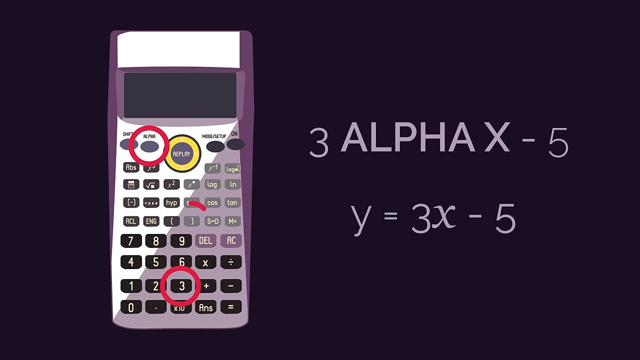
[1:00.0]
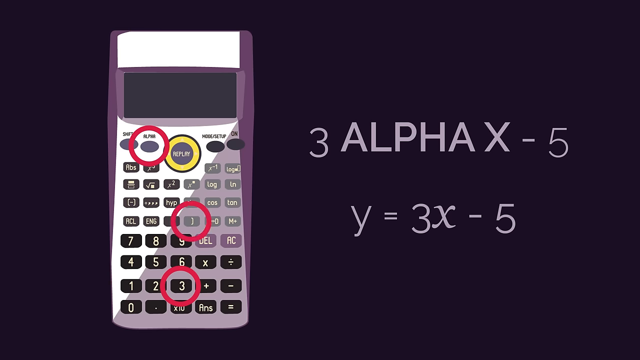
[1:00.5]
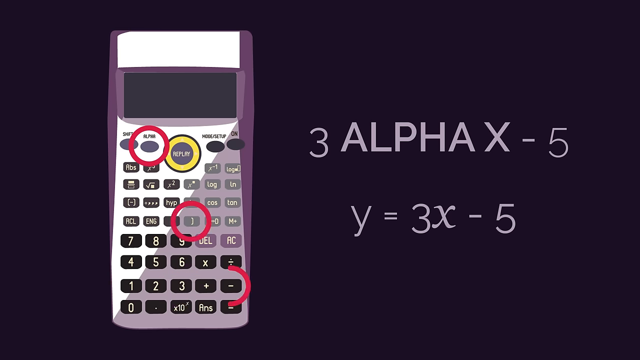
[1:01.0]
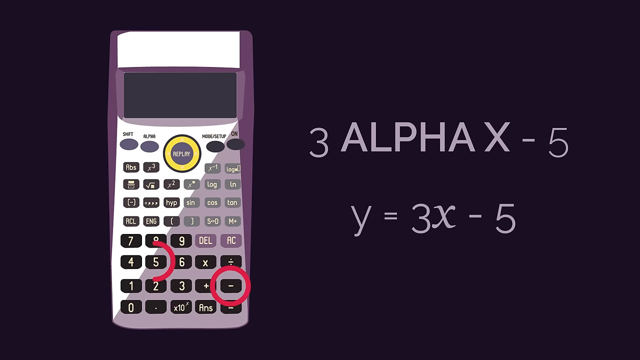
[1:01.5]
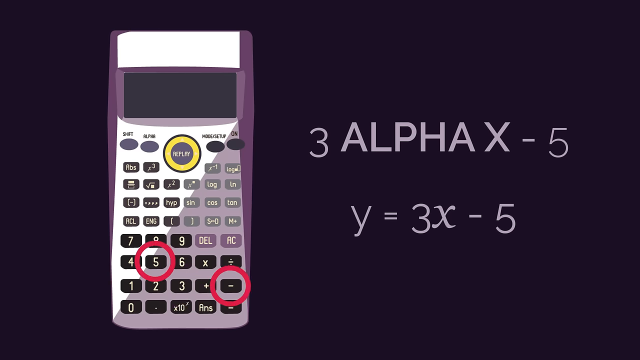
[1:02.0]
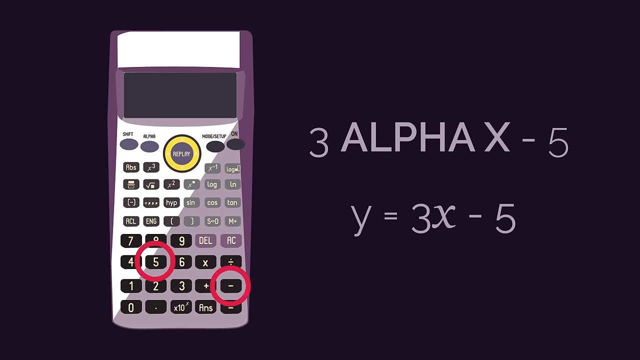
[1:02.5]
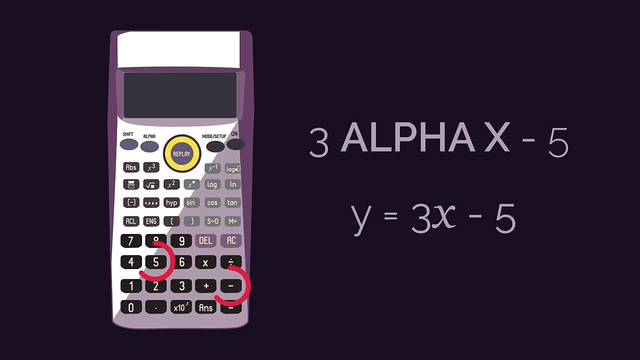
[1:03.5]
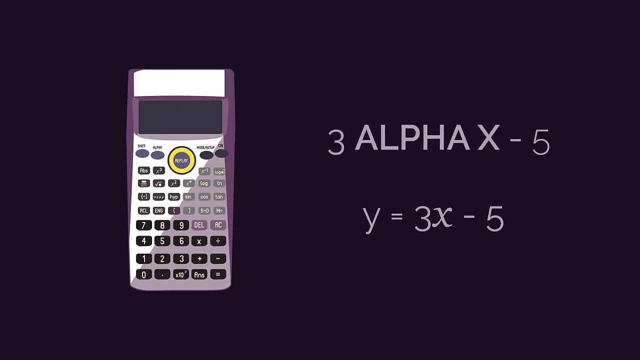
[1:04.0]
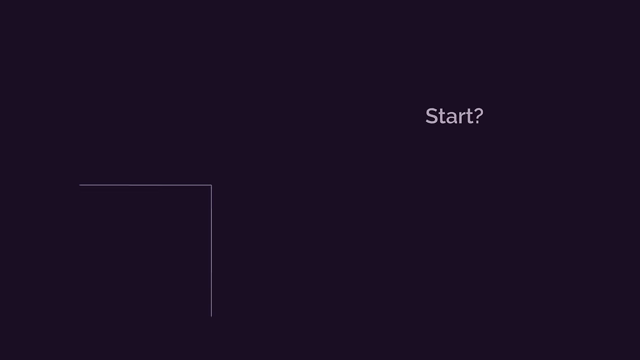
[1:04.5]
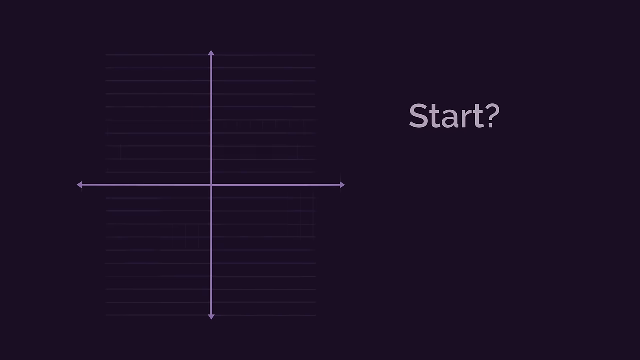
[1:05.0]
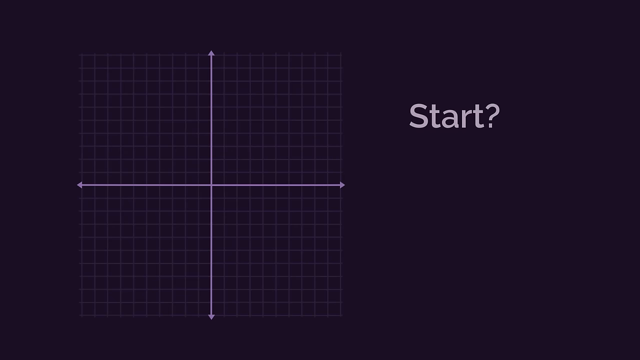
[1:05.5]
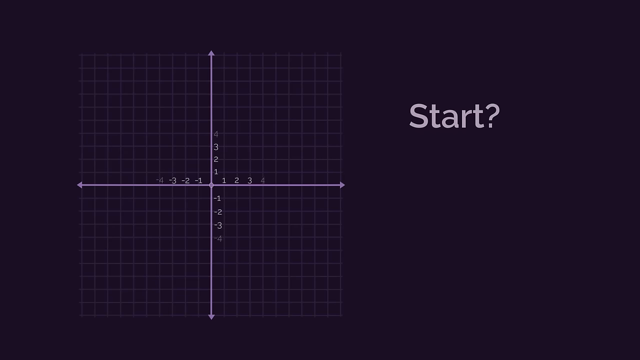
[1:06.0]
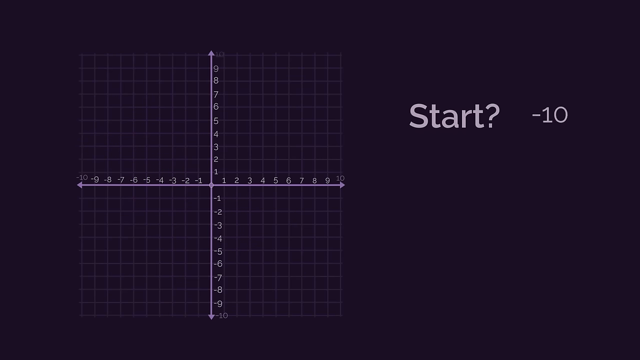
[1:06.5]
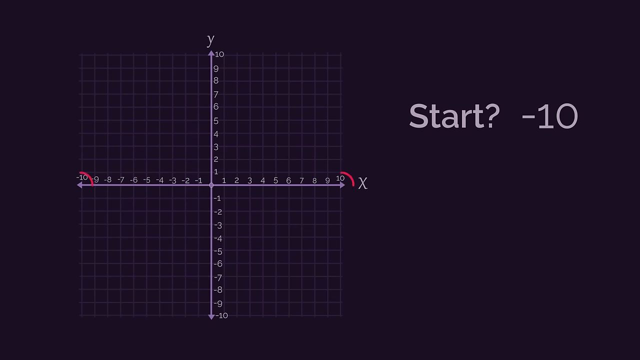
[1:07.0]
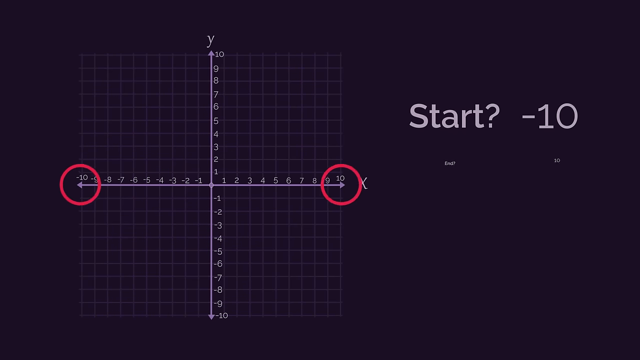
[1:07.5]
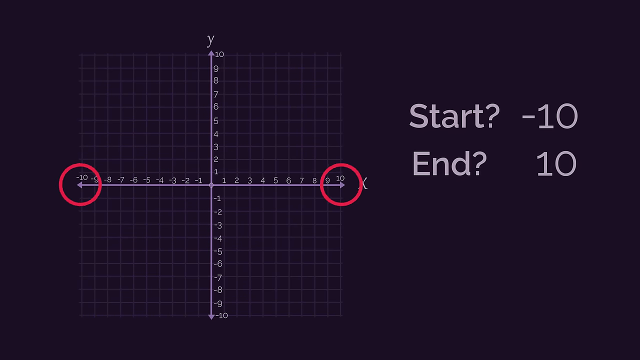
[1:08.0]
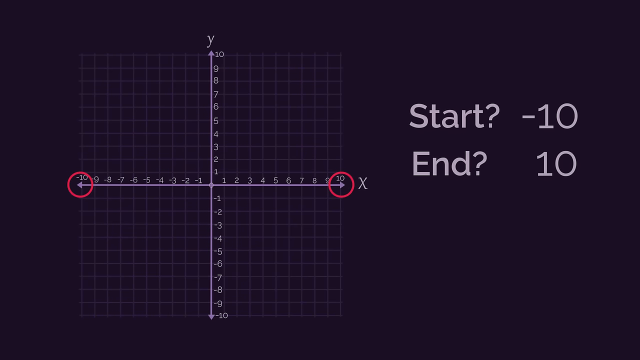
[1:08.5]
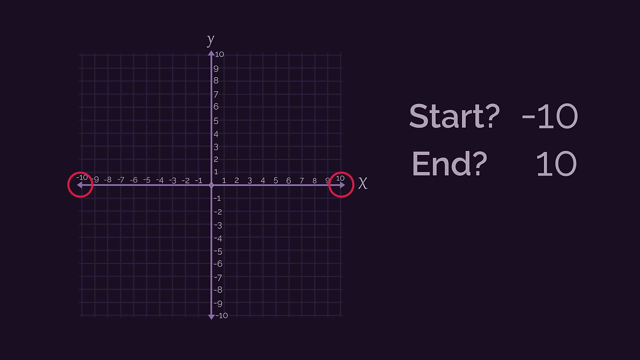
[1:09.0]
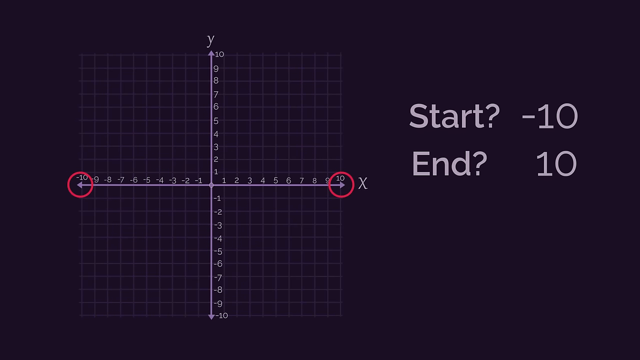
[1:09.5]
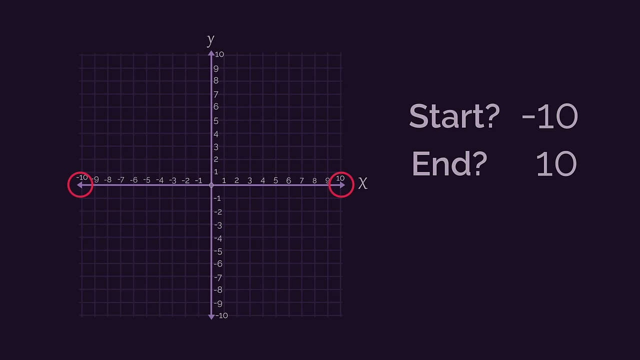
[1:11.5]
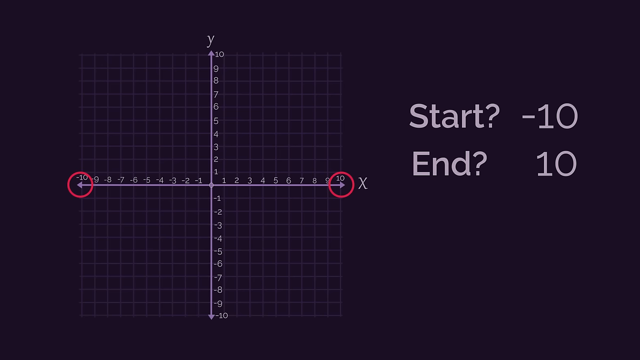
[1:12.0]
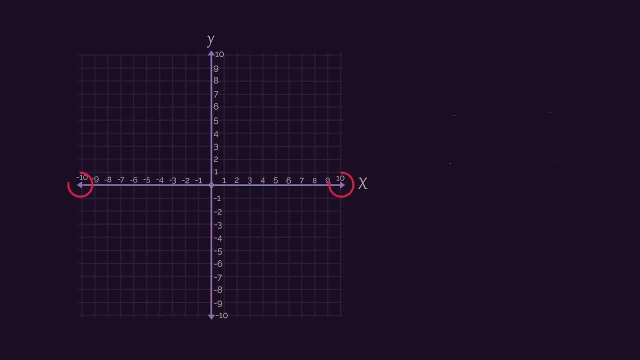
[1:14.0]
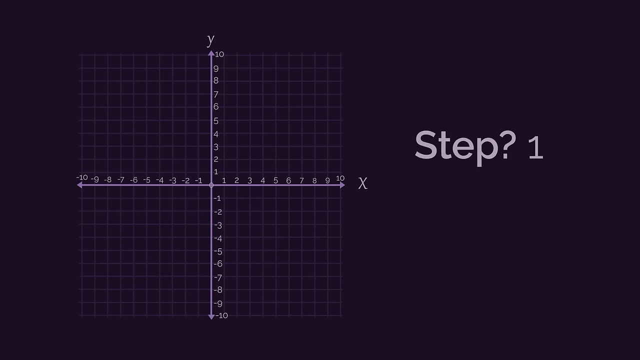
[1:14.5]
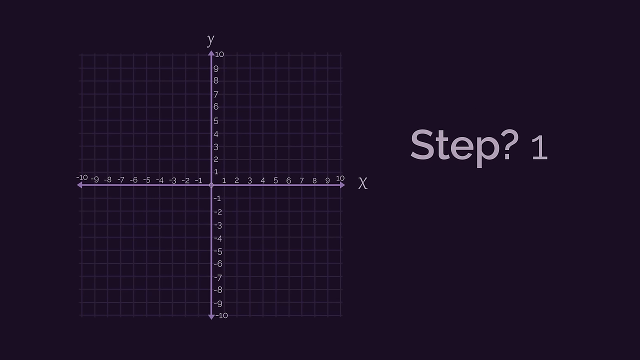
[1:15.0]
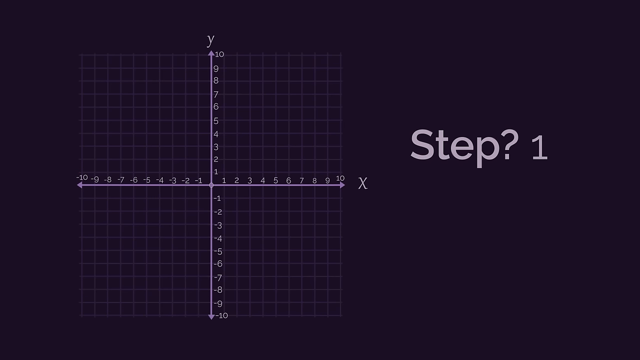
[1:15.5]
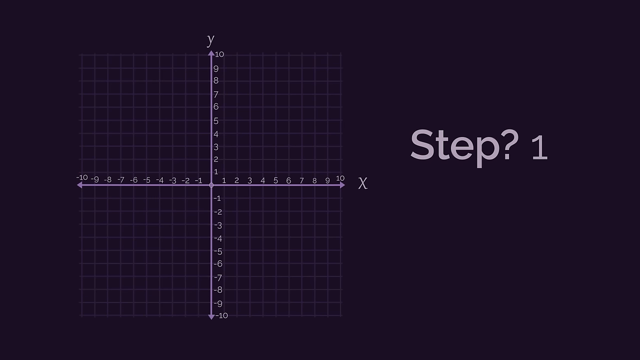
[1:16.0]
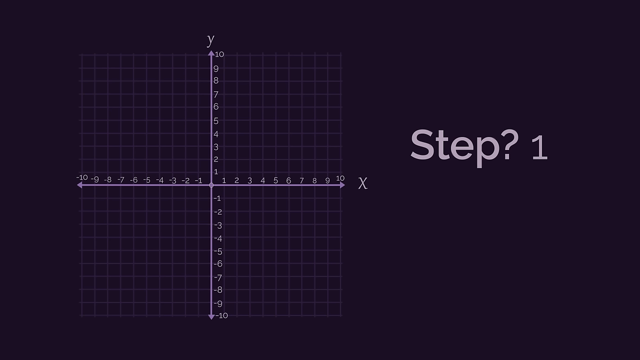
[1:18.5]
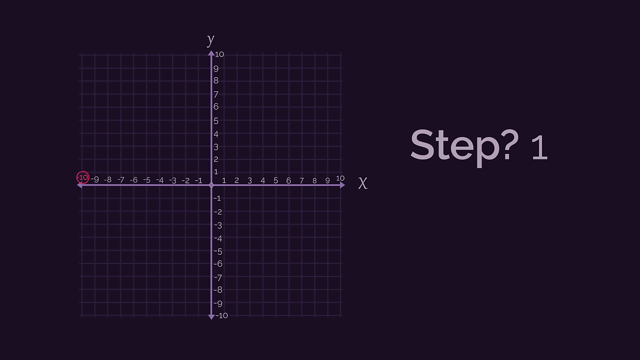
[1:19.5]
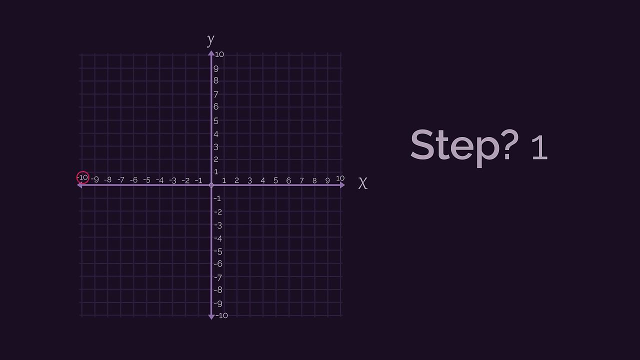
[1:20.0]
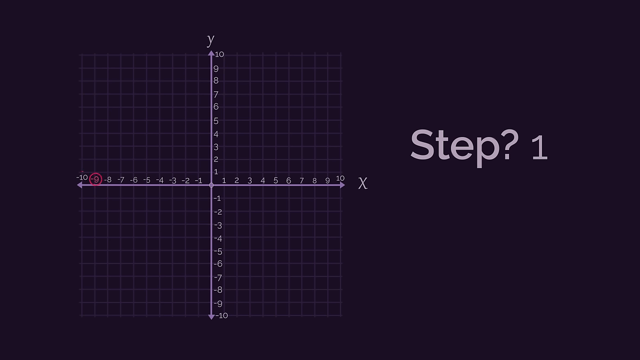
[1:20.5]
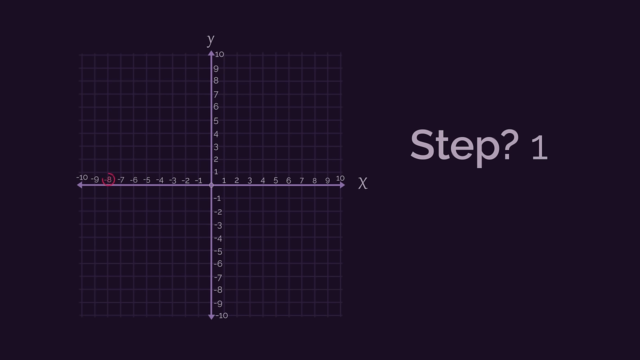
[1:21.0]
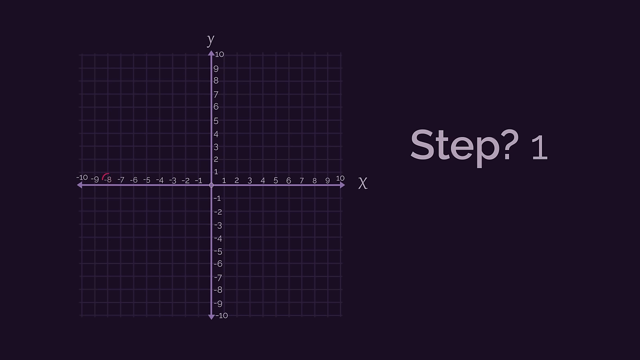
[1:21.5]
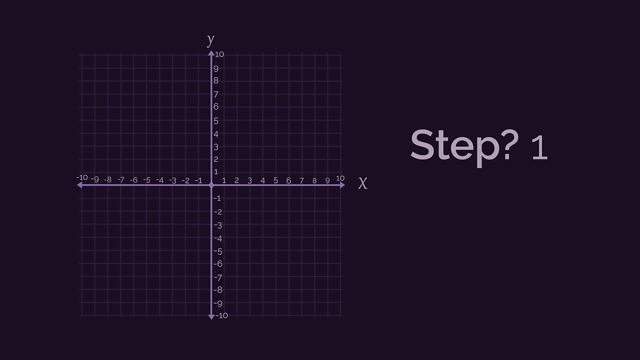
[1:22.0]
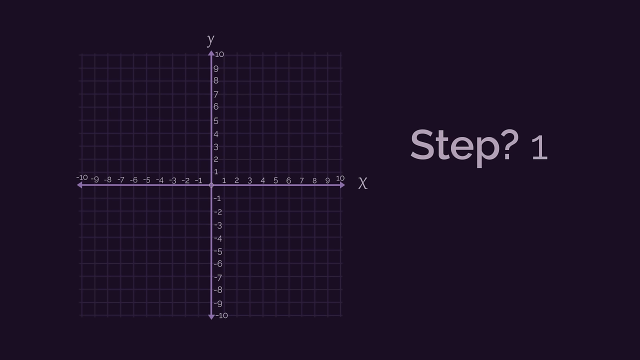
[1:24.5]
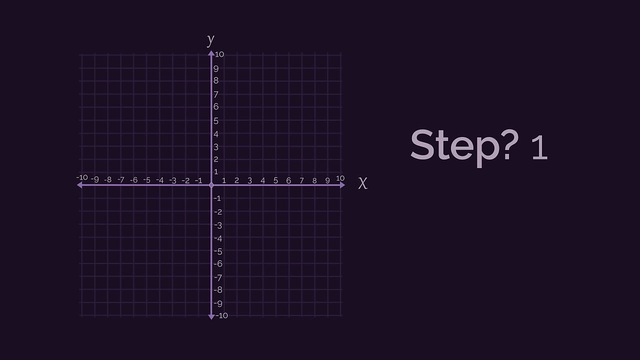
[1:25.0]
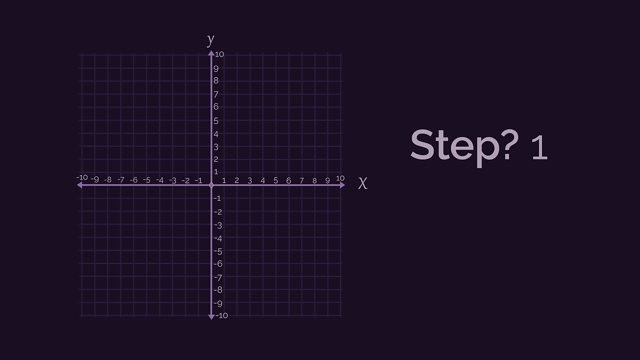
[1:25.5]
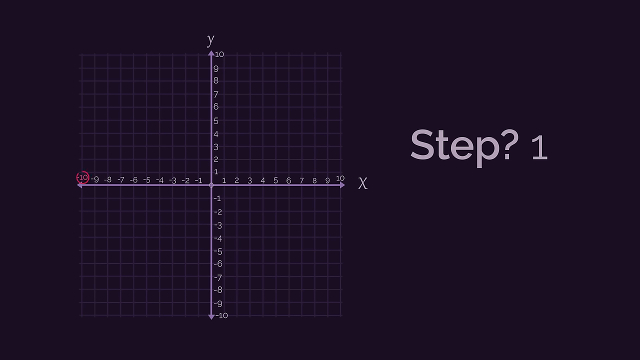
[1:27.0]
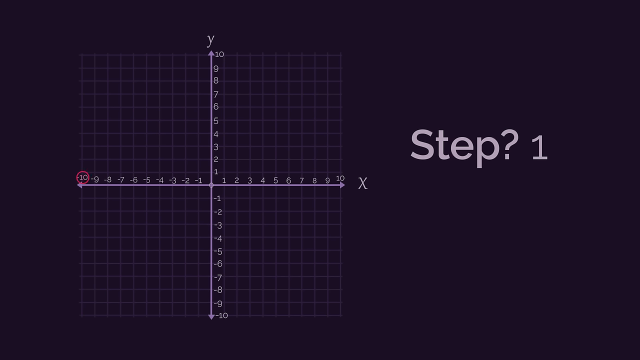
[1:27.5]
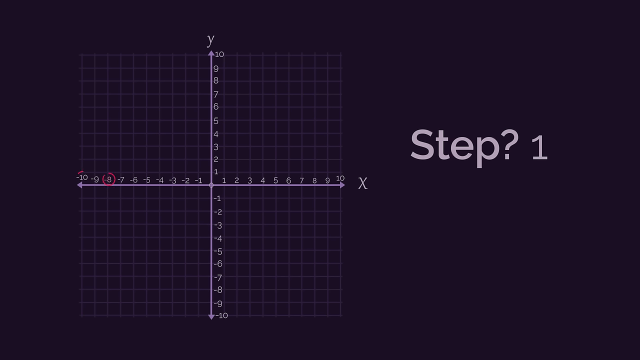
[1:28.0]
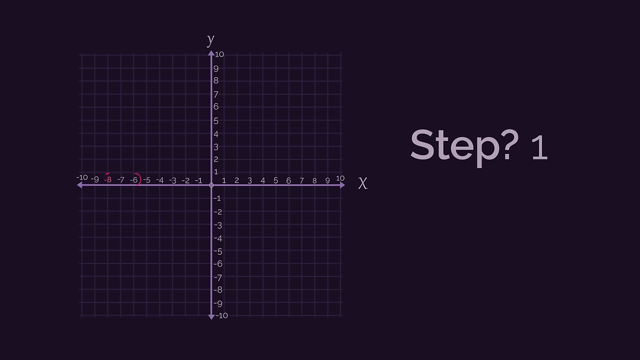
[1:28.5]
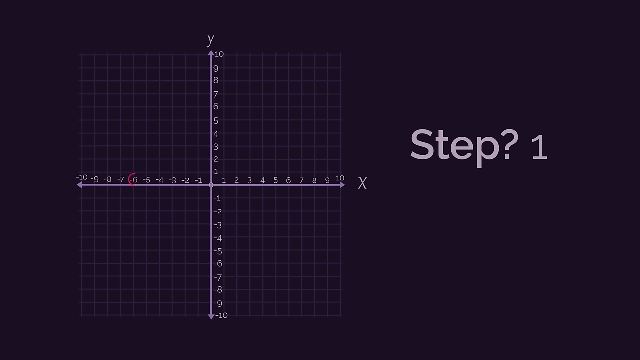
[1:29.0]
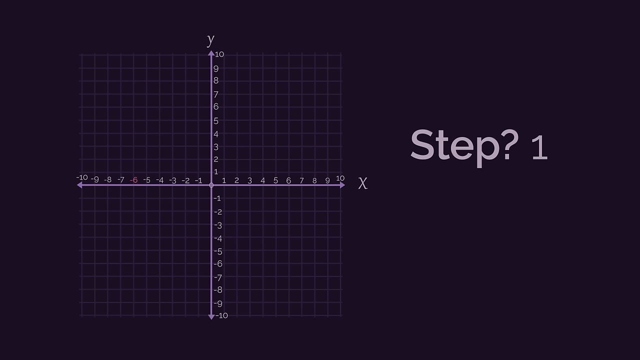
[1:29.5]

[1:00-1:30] A purple calculator is shown with a white rectangle on top above the screen, which is not displaying anything. The area around the buttons is a white and grey background, and the buttons are black, purple, and grey. Several buttons are circled in red: the alpha button, the minus button, and the number 5. On screen to the right are the words "3 alpha x minus 5" and then "y equals 3x minus 5." The calculator and equations disappear, and a purple line graph appears. To the right, the word "start" followed by a question mark appears. Numbers appear on the graph, from negative 10 to positive 10 on the x-axis and from negative 10 to positive 10 on the y-axis. The negative 10 on the x-axis and the negative 10 on the y-axis are both circled. The captions then say "start negative 10, end positive 10," and a caption reads "Step 1."